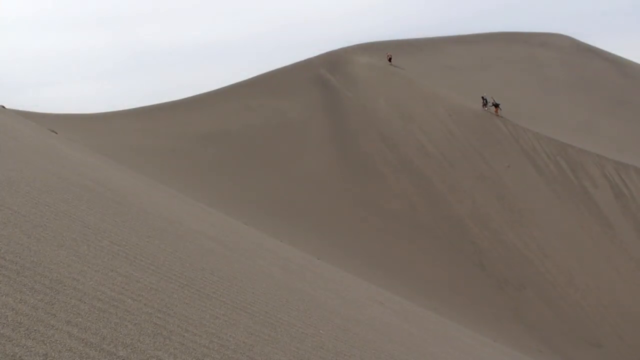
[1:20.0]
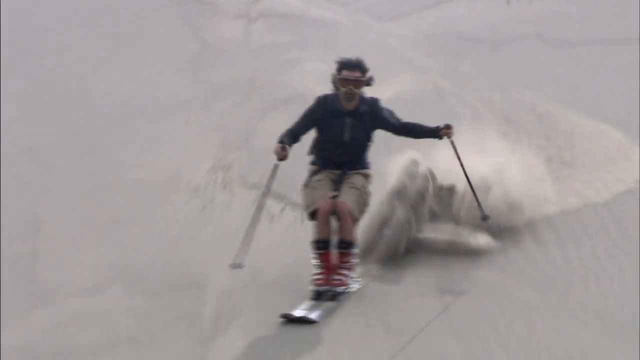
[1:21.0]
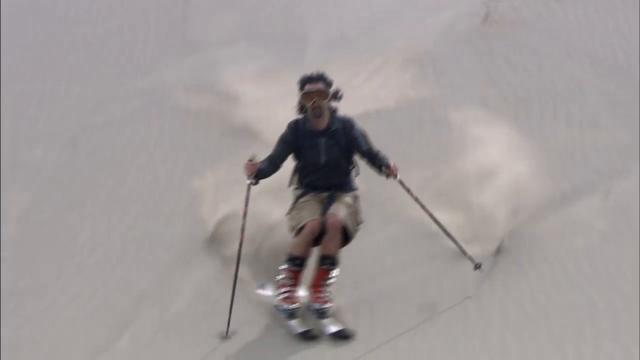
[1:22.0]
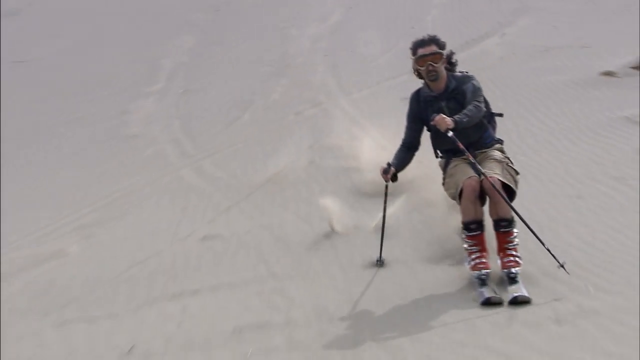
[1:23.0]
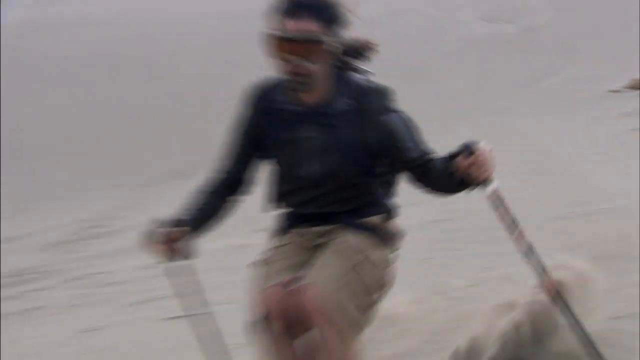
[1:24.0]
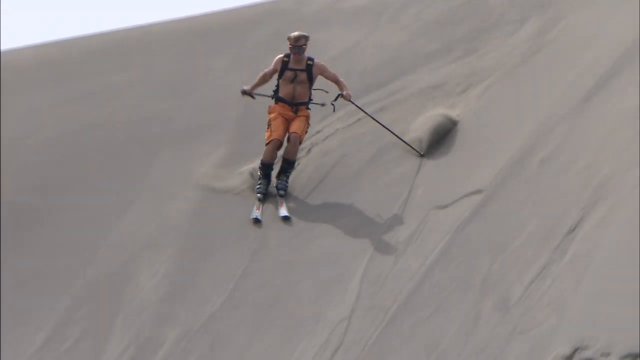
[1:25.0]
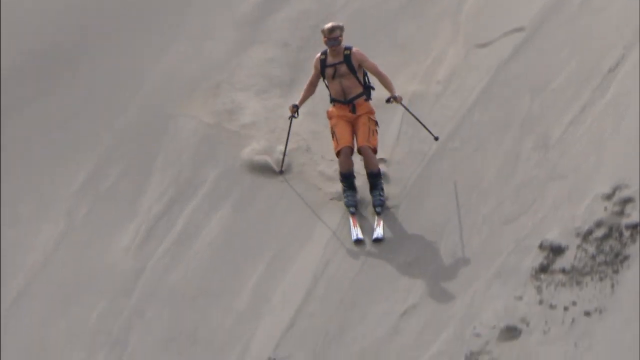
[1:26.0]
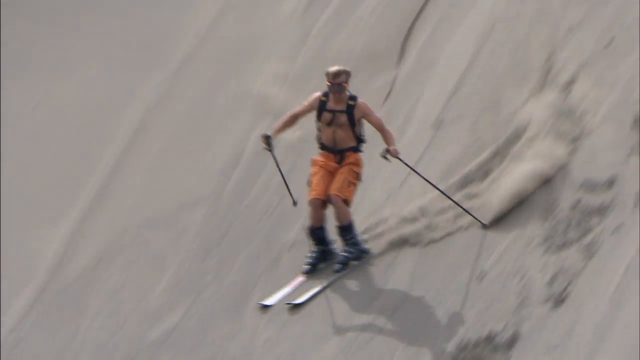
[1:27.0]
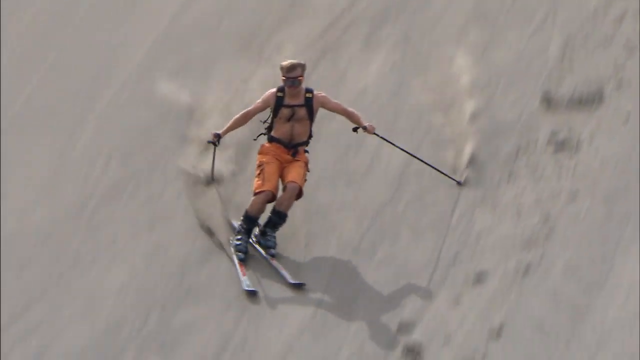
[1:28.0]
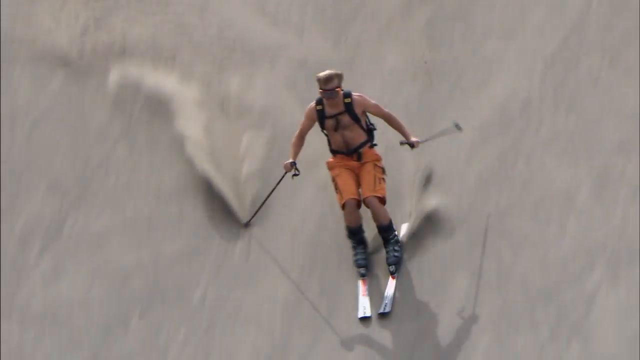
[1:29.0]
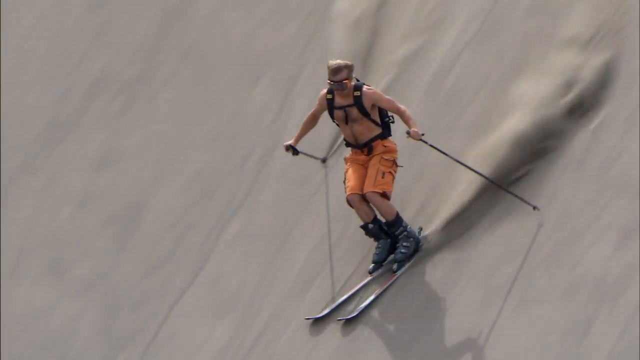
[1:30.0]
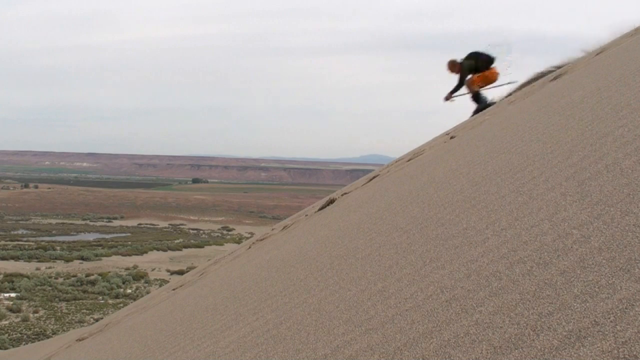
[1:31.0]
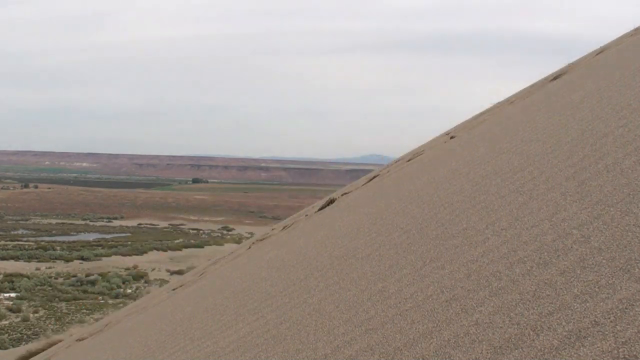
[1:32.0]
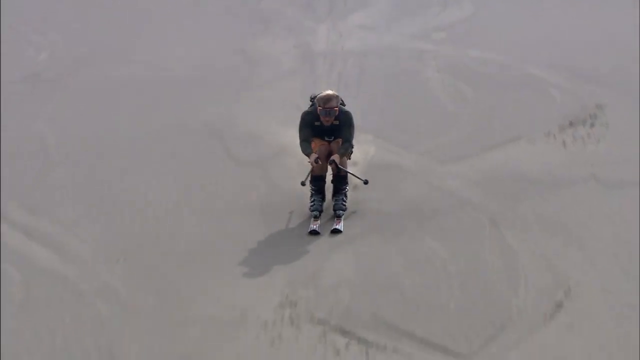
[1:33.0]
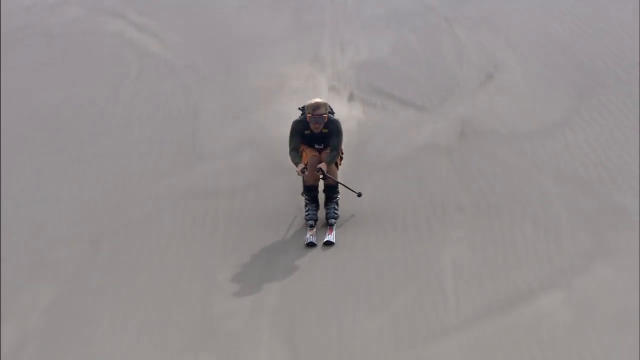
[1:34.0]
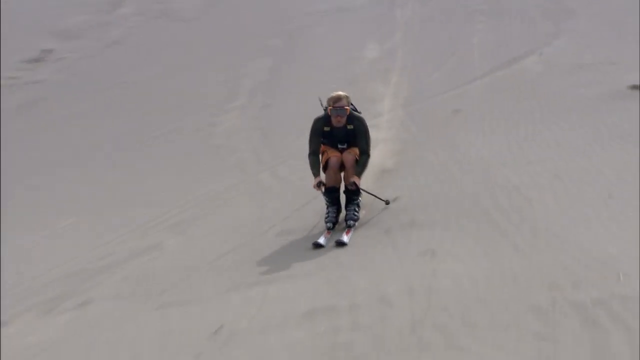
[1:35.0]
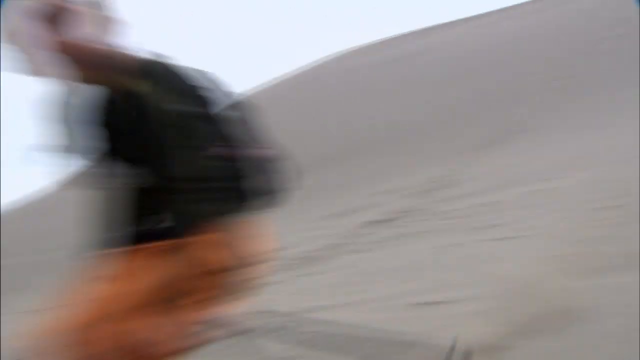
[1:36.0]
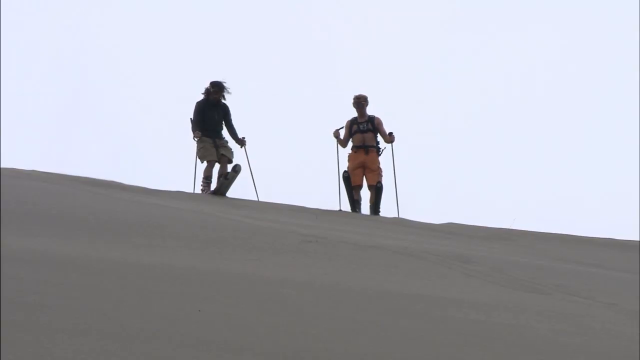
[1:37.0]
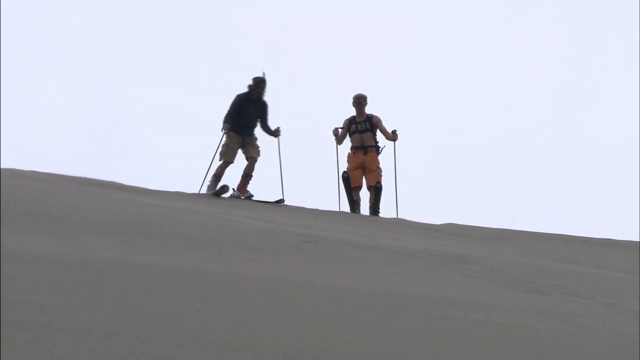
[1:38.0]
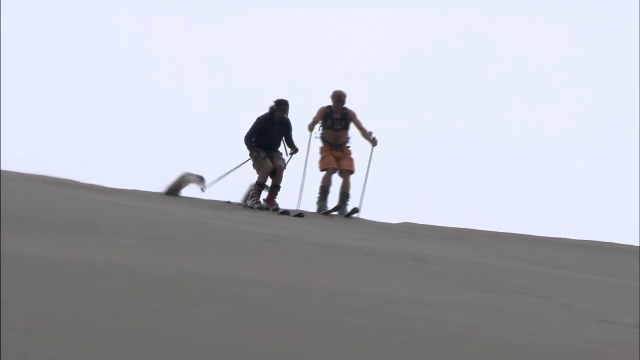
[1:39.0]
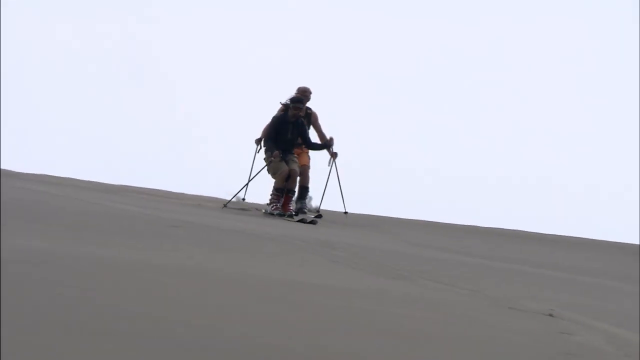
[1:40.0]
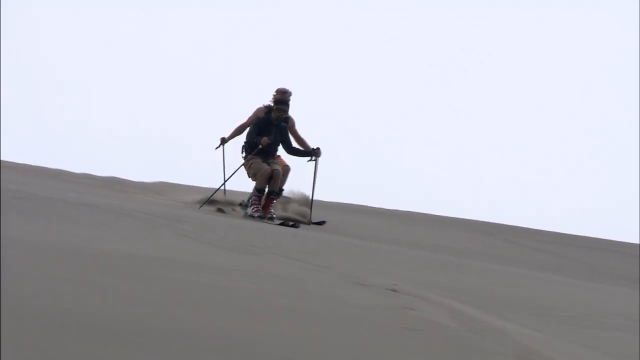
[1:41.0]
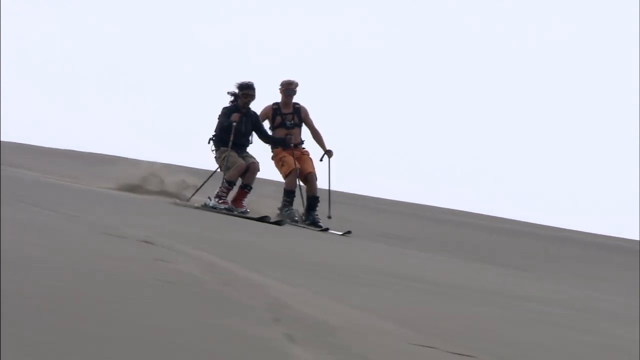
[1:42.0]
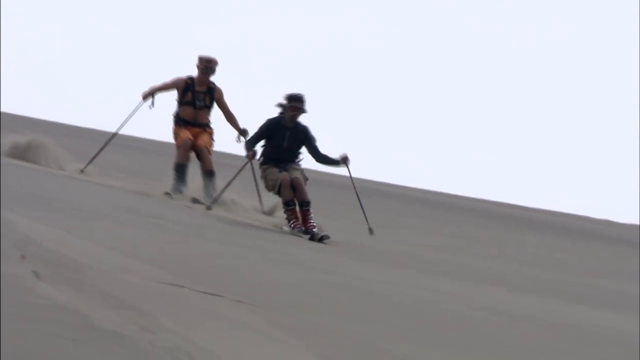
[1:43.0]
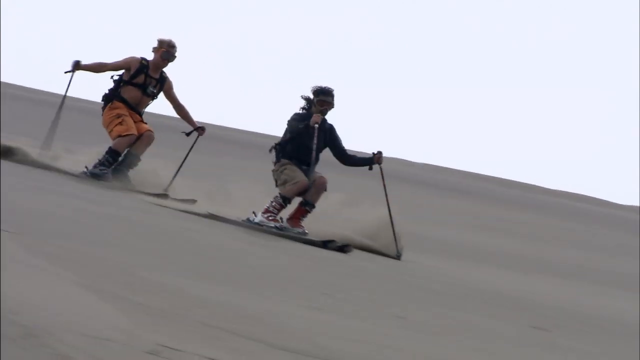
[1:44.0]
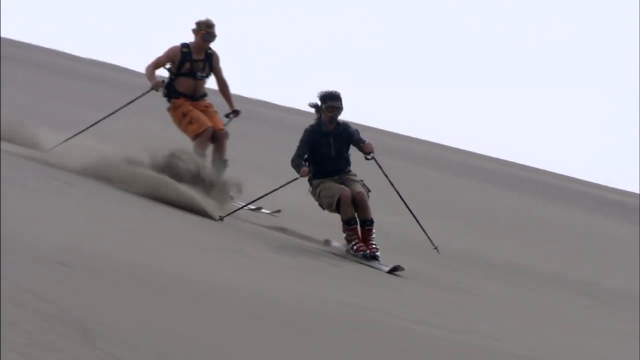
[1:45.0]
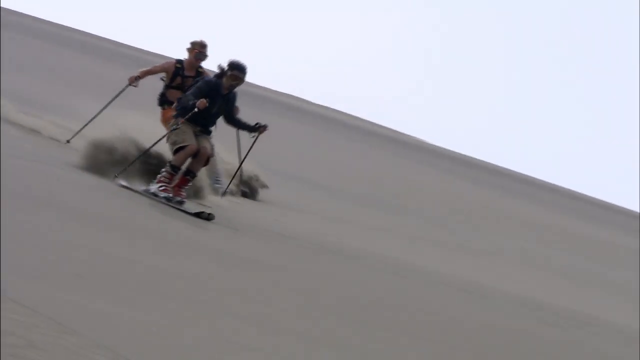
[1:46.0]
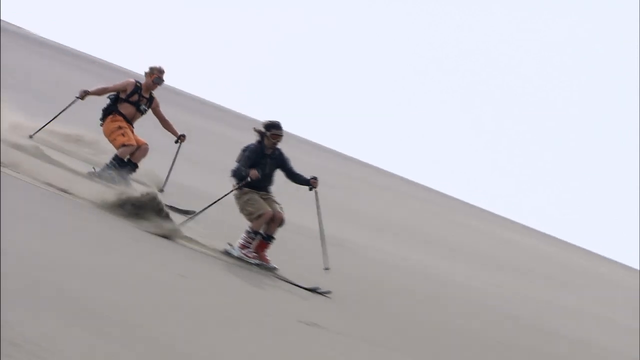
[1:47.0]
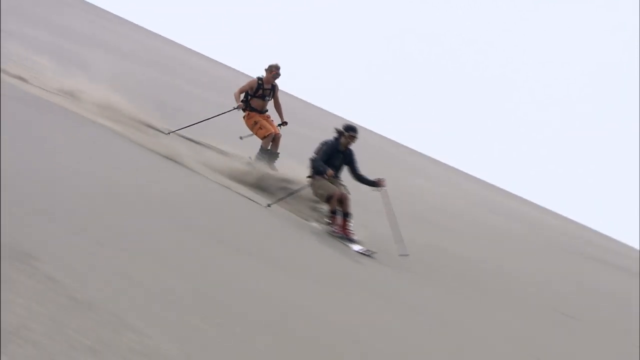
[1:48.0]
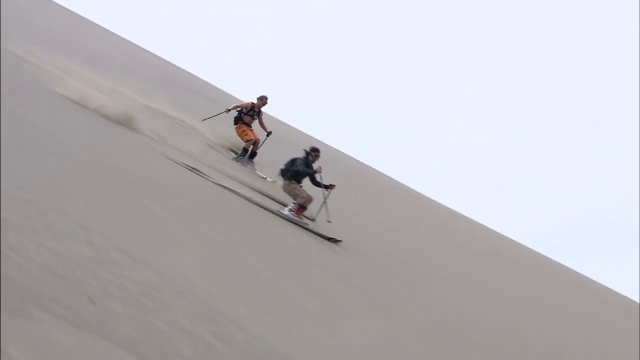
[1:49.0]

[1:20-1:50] Somebody skis down a mountain holding a black ski pole in each arm; they plant the left ski down into the ground, turn to the right, and pass right by the camera. It looks like the next person is skiing down the desert mountain, which is essentially sand. This person has their shirt off and wears a black vest and orange shorts, with one ski pole in each hand, and kind of makes zigzag patterns down the mountain, going from side to side. The next shot is angled sideways, with the skier shooting down the mountain from the top right corner of the frame to the bottom left corner as they pass by. Then a different skier comes down the desert mountain, seen from a front point of view, also holding black ski poles.